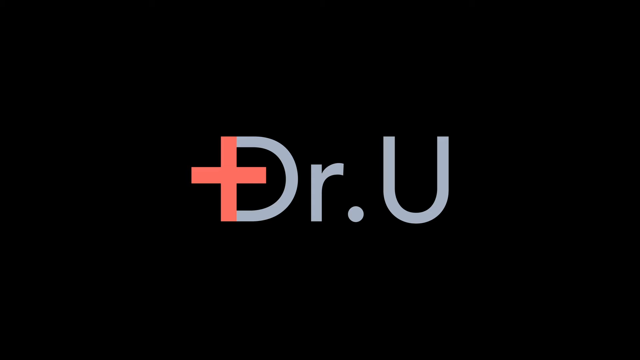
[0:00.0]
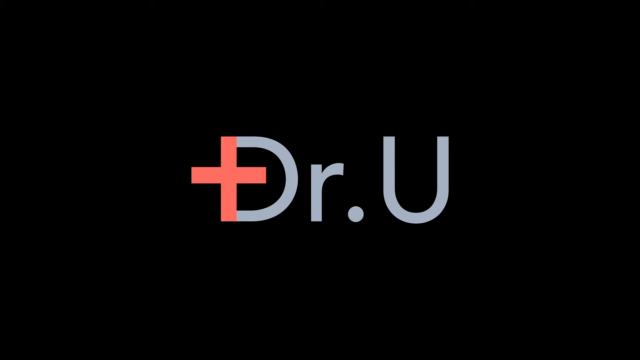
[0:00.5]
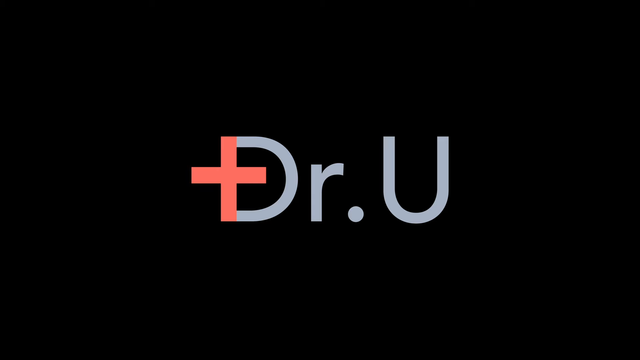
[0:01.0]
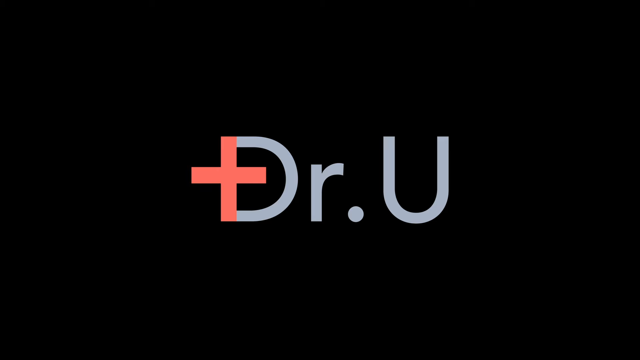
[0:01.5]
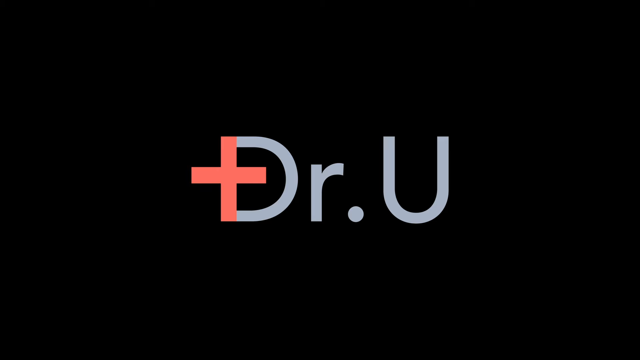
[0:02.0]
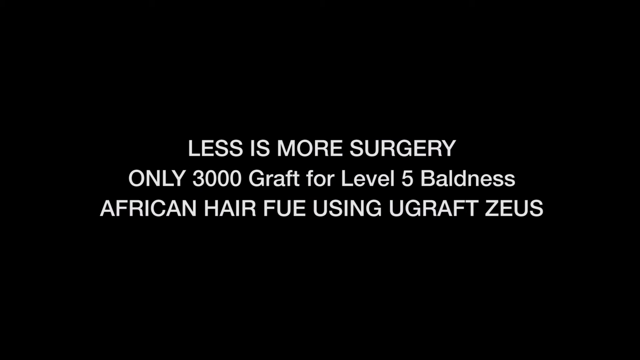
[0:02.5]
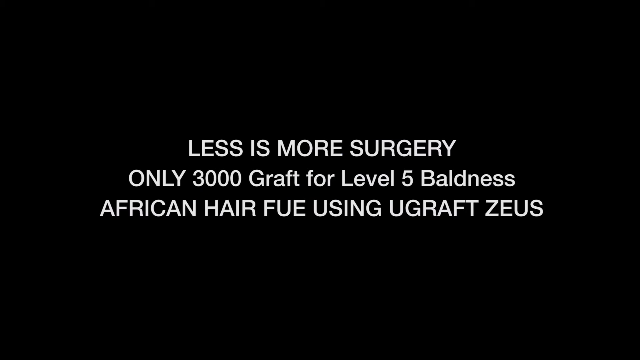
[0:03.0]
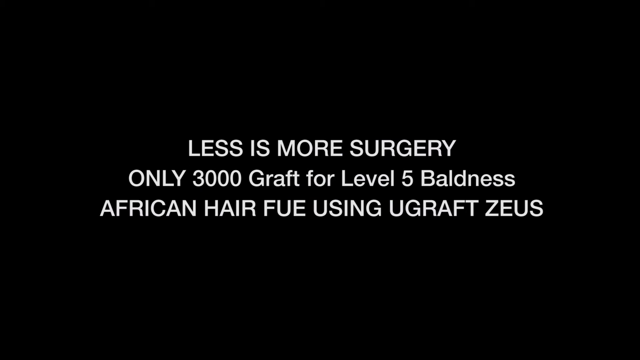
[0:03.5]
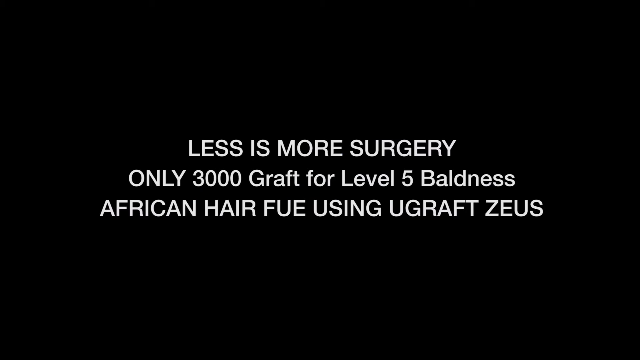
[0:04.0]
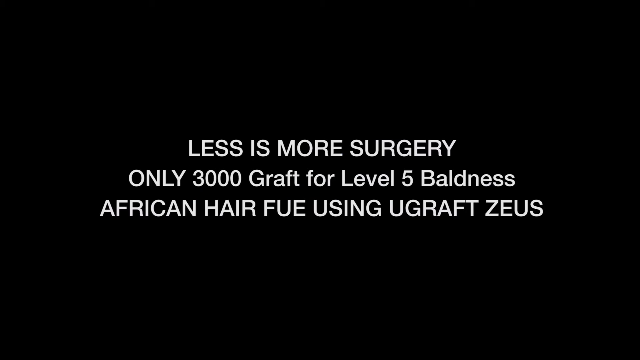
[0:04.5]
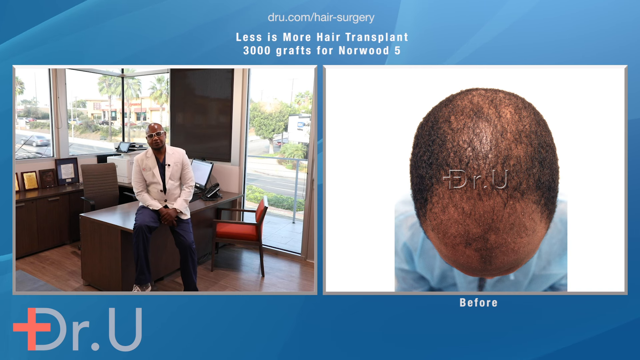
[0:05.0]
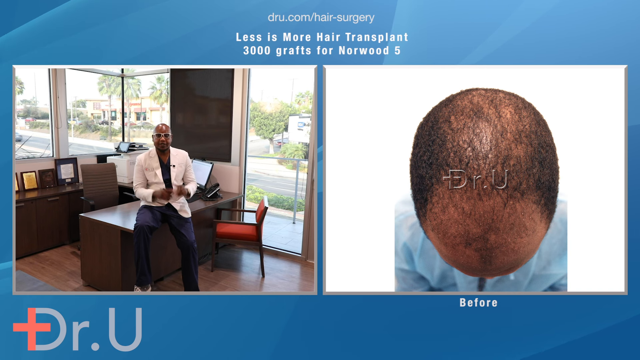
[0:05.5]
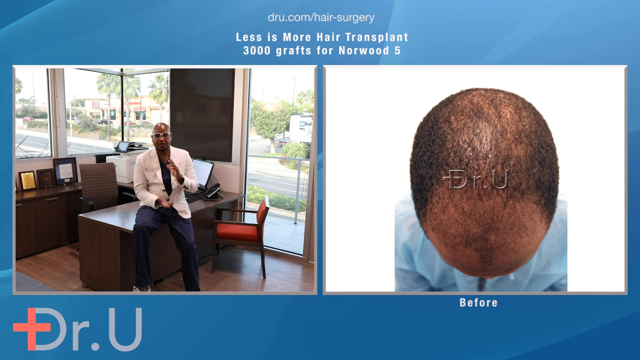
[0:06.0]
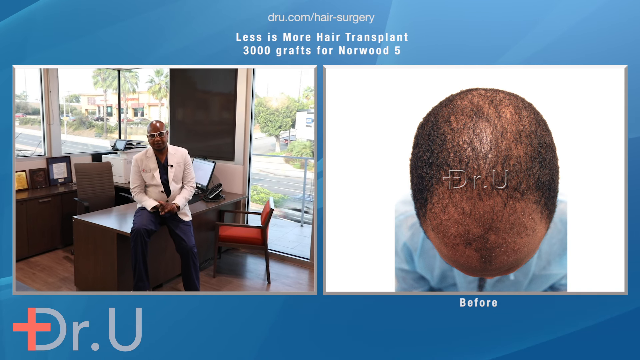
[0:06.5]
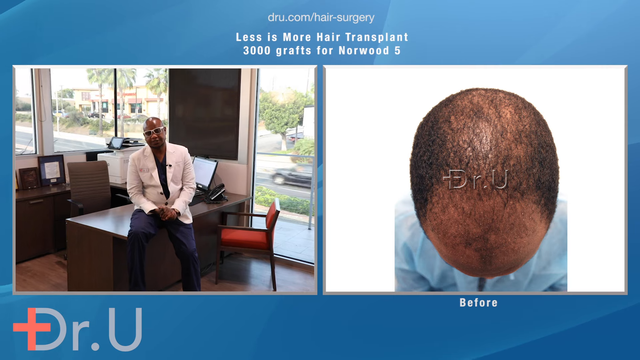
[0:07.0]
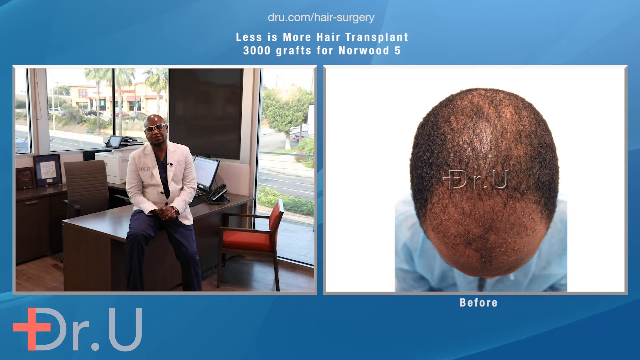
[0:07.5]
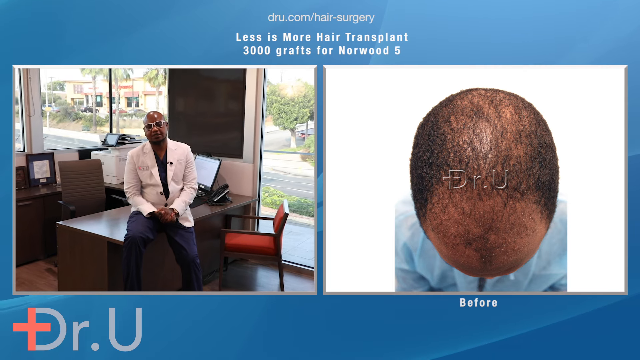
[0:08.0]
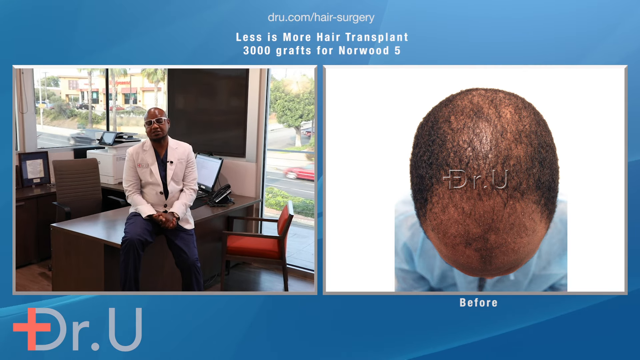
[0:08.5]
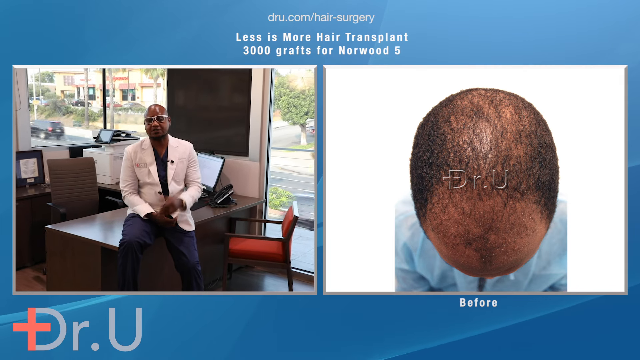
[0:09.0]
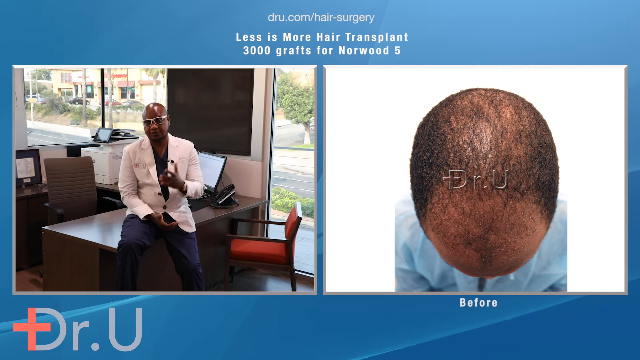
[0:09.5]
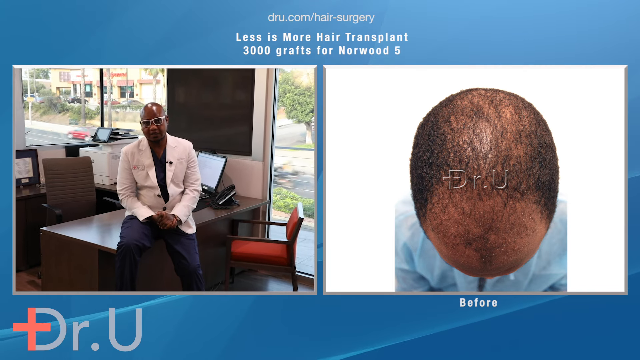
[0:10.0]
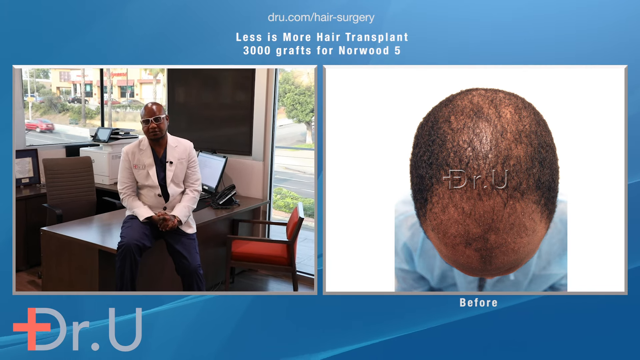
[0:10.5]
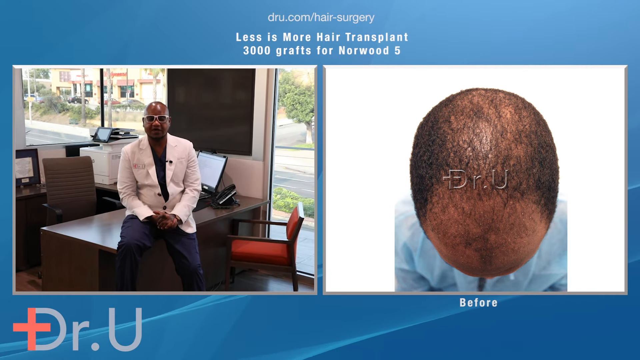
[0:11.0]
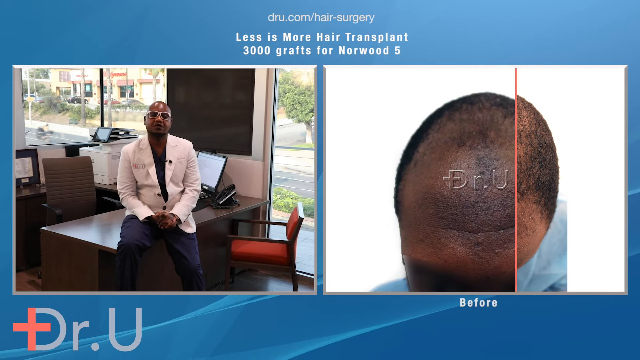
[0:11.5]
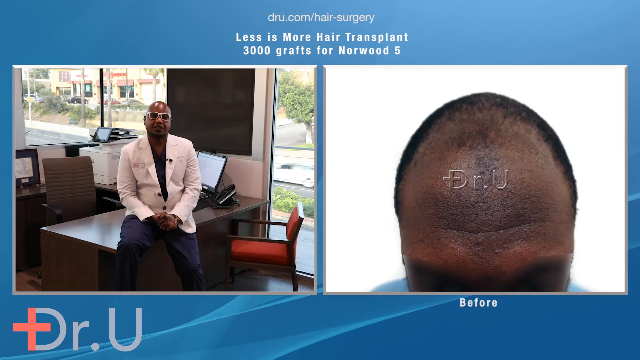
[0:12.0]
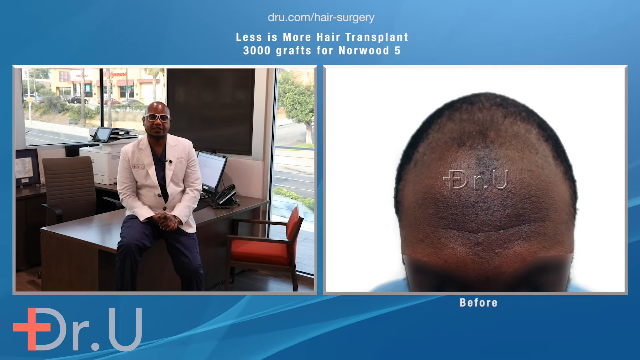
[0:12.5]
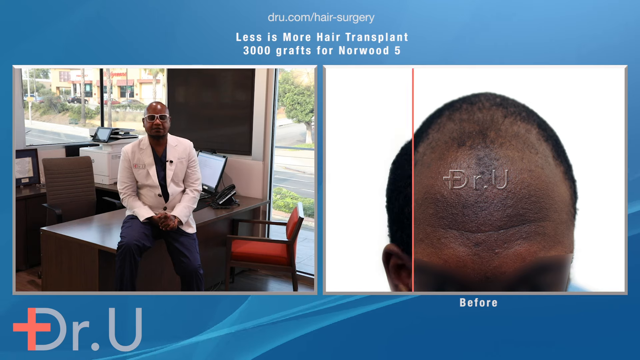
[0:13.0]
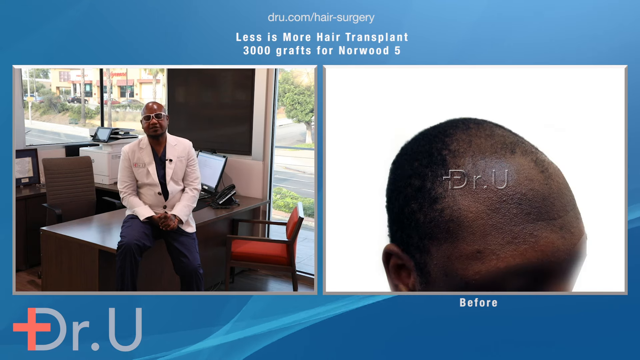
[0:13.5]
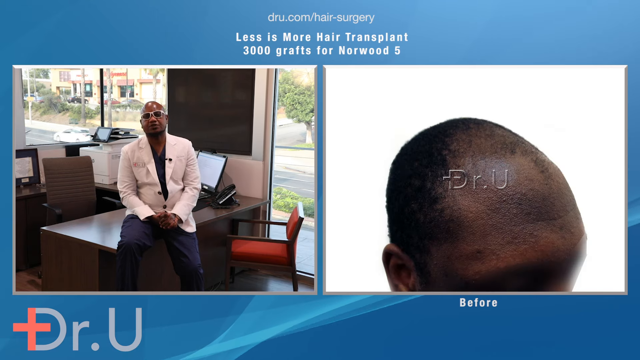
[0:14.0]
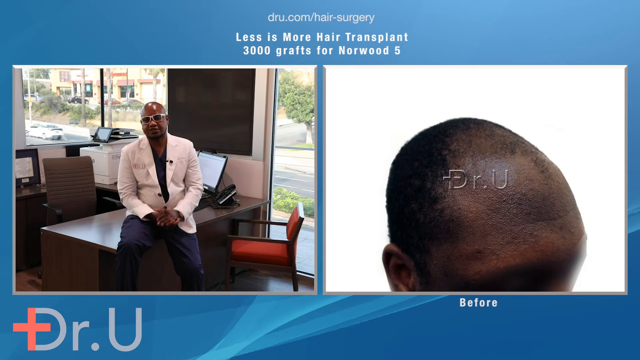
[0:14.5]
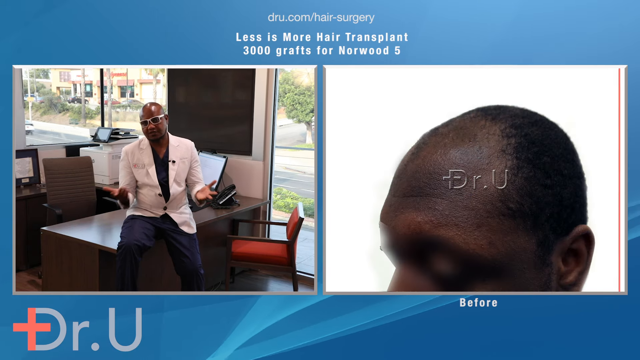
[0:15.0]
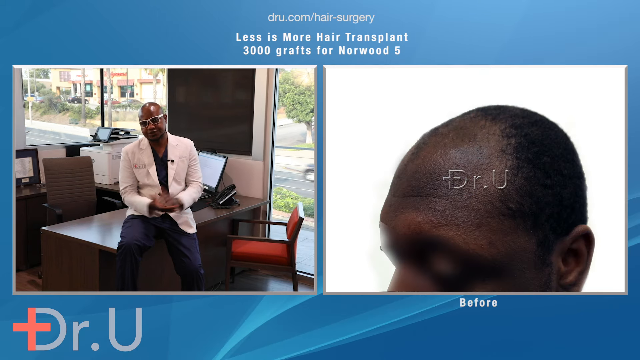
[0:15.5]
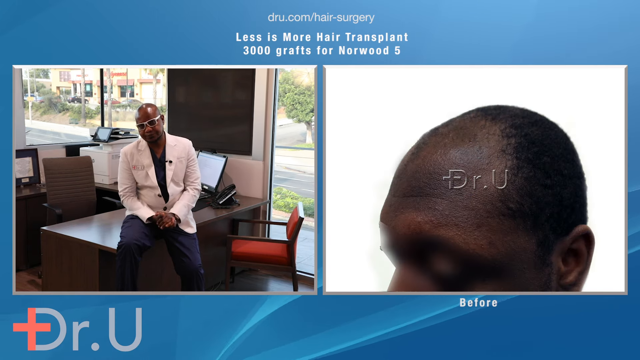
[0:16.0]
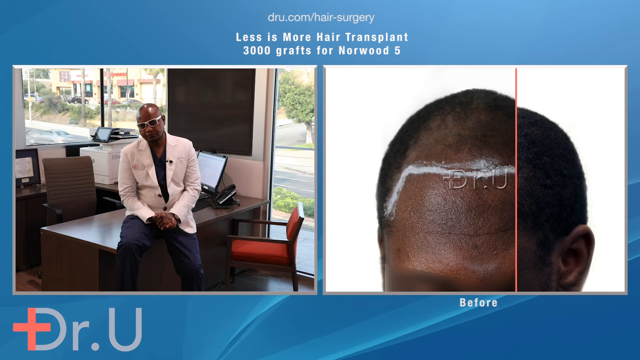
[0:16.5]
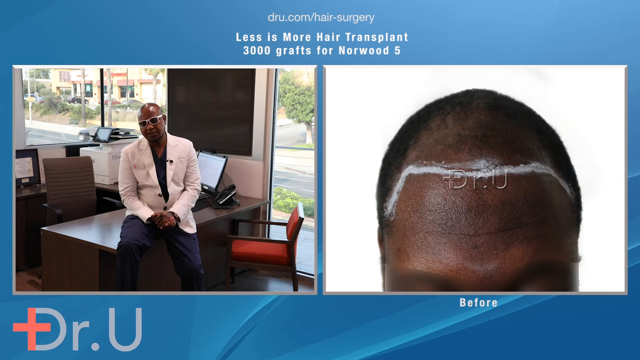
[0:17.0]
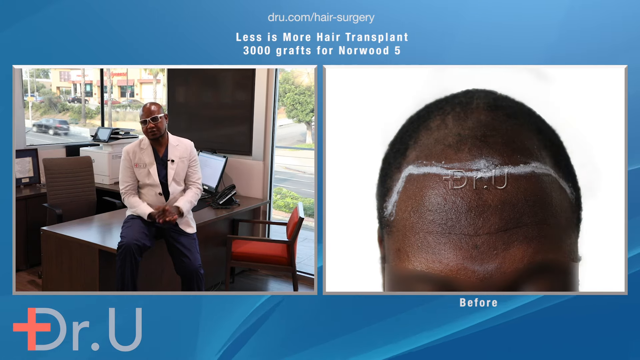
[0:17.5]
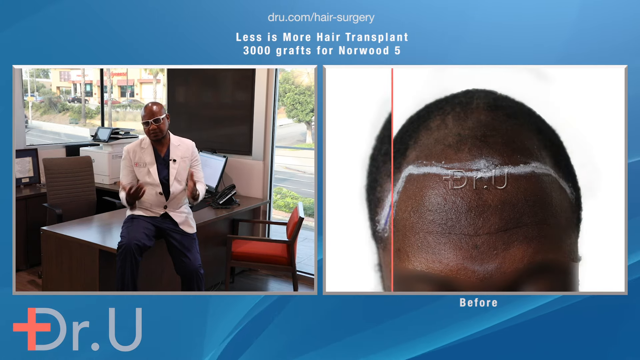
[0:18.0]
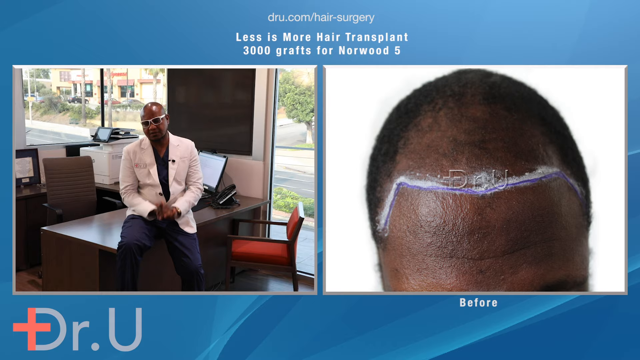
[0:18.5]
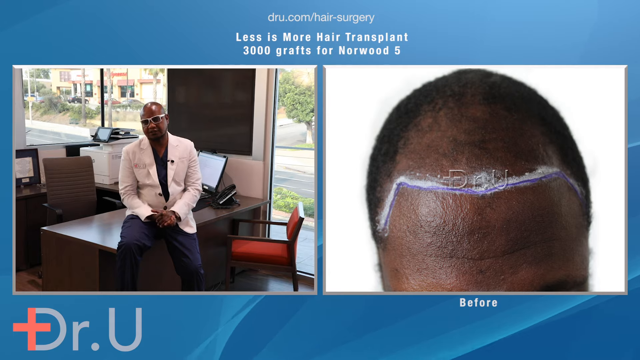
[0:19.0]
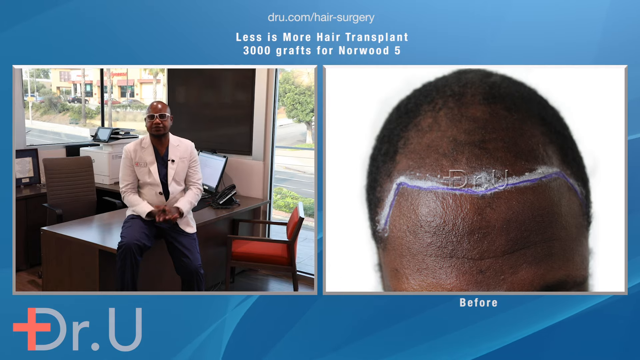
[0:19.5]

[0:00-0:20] This ad for hair graft surgery opens with a title card that says "Dr. U"; the straight line in the D looks like a red cross. Text then appears on the screen: "Less is more surgery, Only 3,000 Graft for Level 5 Baldness African Hair Fue Using Ugraft Zeus." The screen changes to show an inset video on the left side and a series of inset photographs on the right side, with text above both that reads "Less is More Hair Transplant, 3000 grafts for Norwood 5." The video on the left shows a man who appears to be a doctor, wearing a white doctor's coat and sitting on the edge of a desk in an office surrounded by windows. A computer screen is on the desk behind him. He speaks to the camera and gestures. On the right is a series of photographs of a man's head, filmed from above, from the front, and from the side. In the last several photos, taken from several different angles, he has what looks like a white line drawn over his scalp where his hairline should be. Underneath those photos is the word "Before."